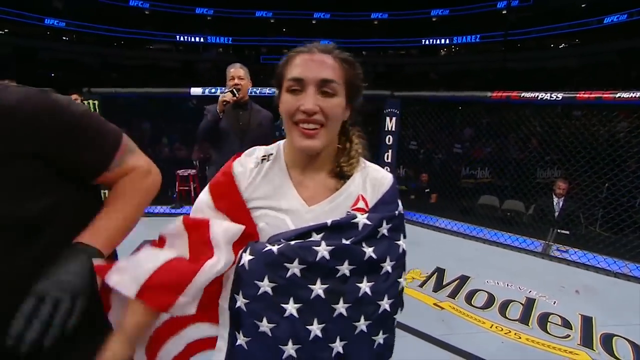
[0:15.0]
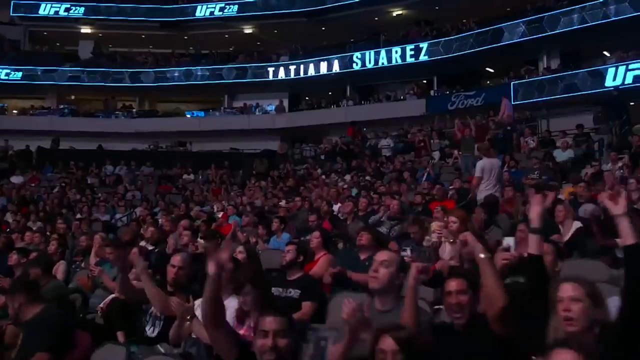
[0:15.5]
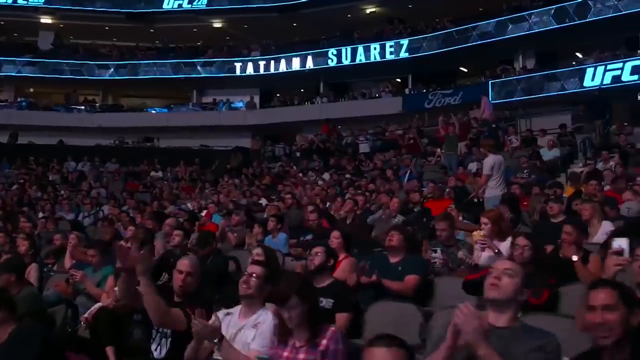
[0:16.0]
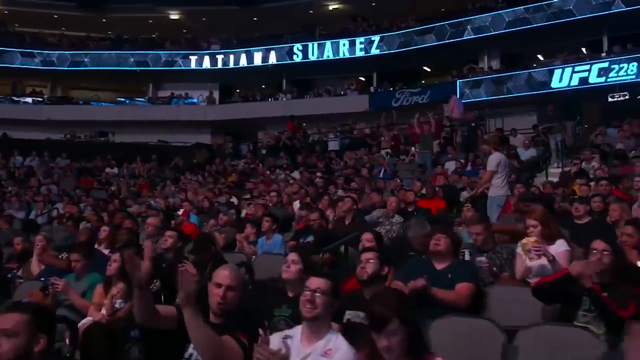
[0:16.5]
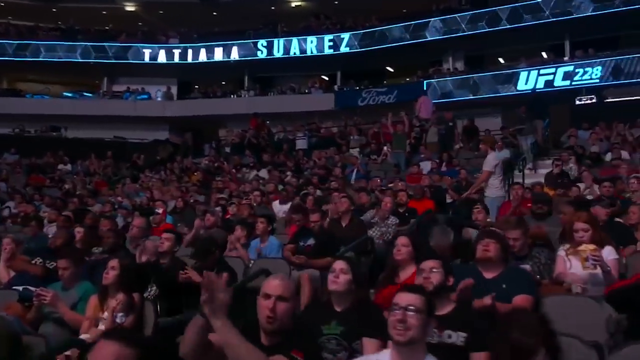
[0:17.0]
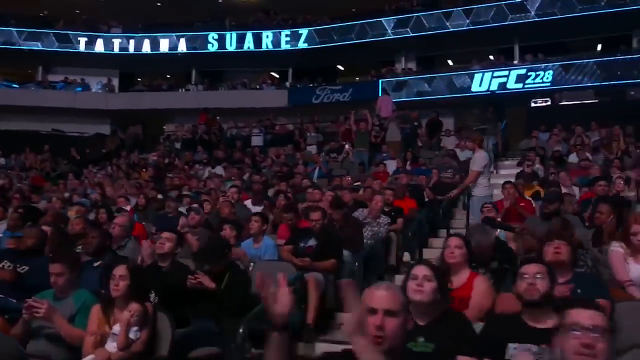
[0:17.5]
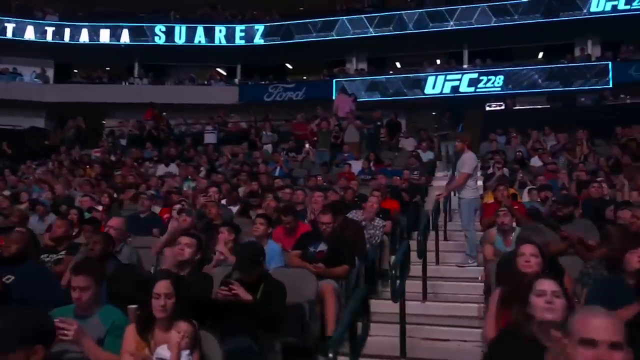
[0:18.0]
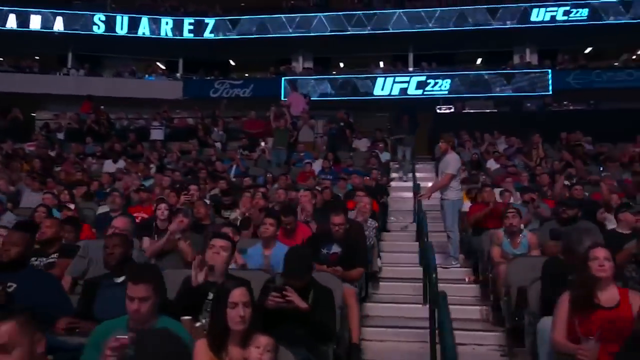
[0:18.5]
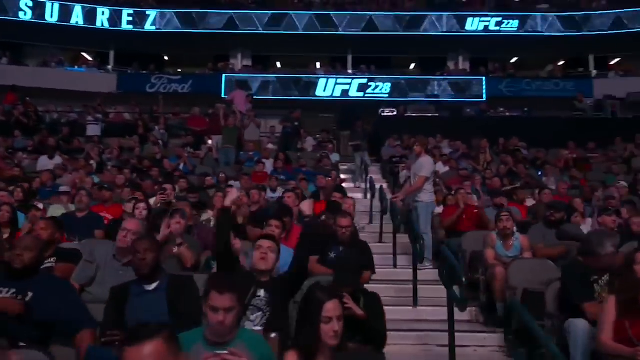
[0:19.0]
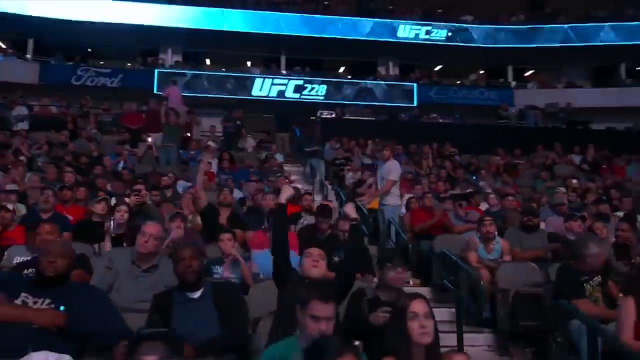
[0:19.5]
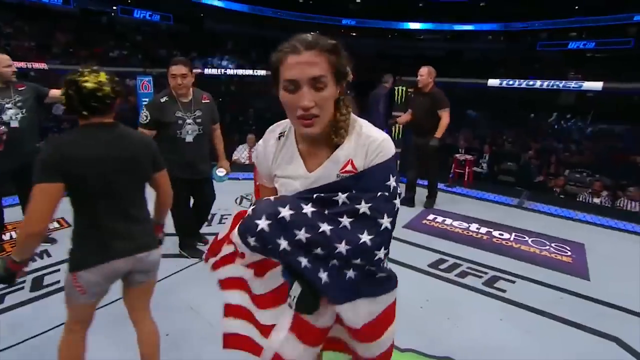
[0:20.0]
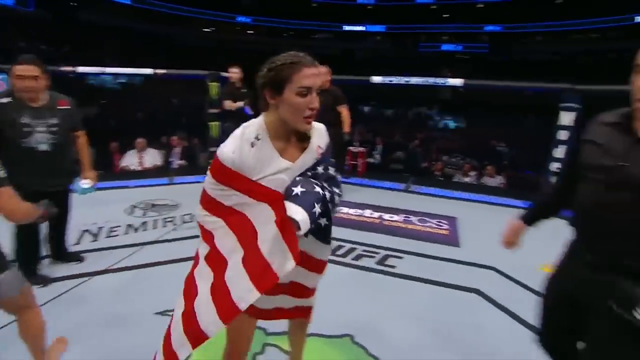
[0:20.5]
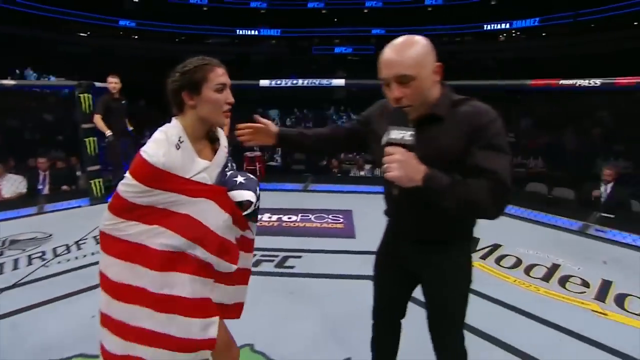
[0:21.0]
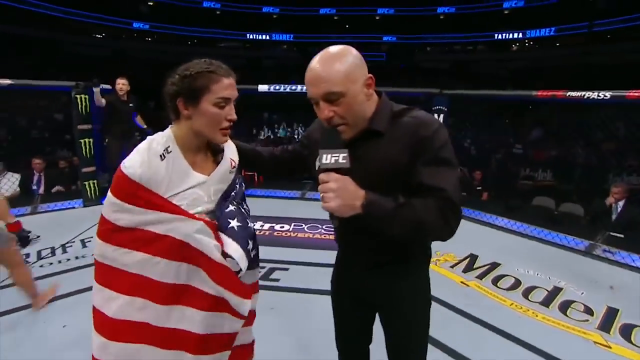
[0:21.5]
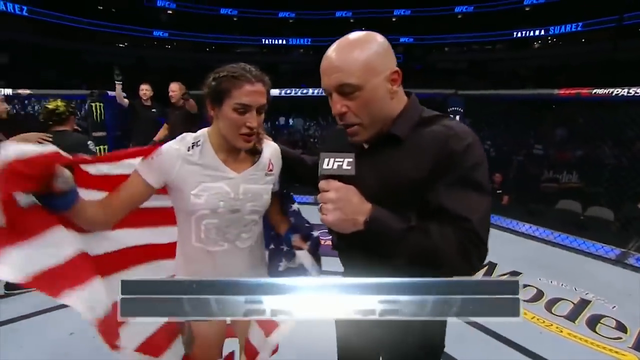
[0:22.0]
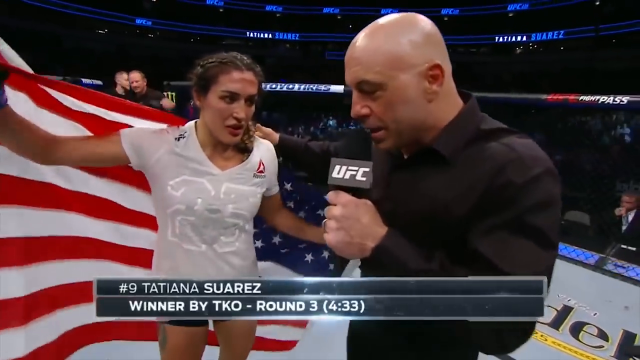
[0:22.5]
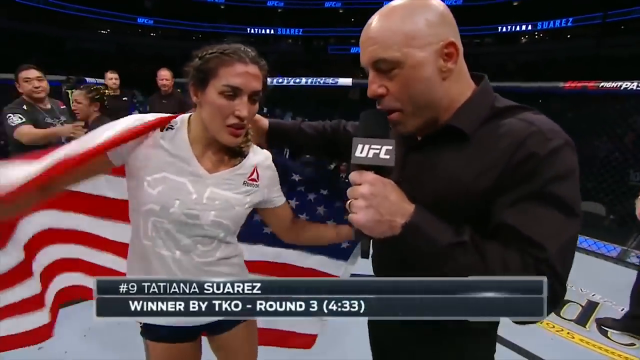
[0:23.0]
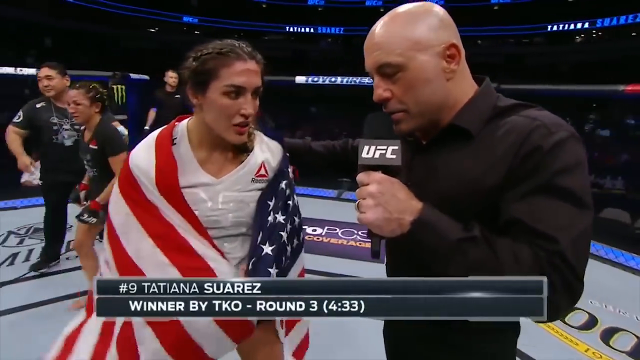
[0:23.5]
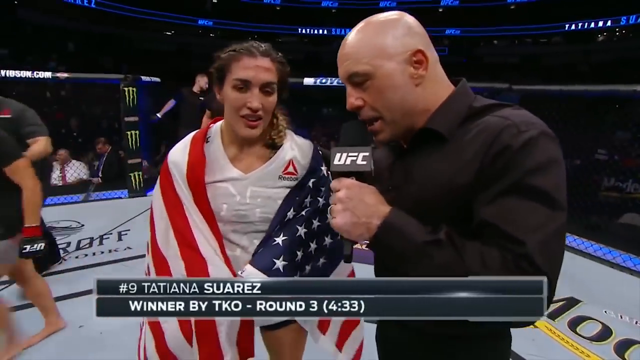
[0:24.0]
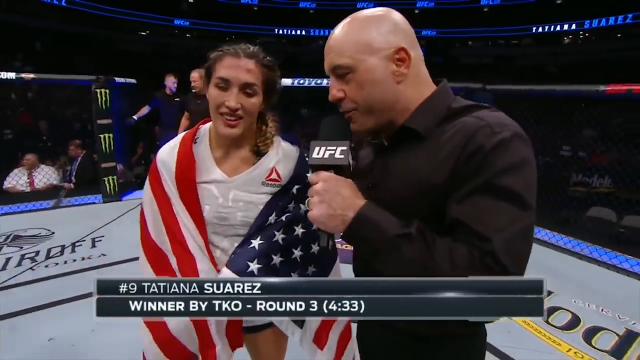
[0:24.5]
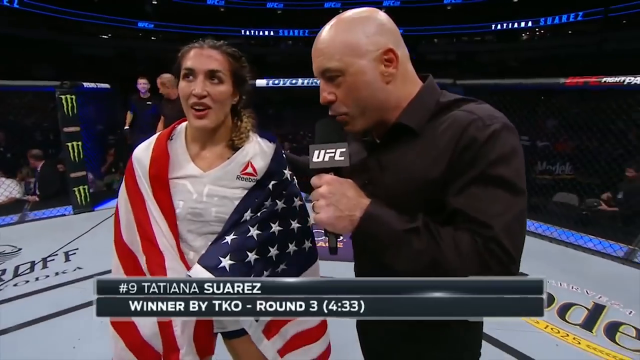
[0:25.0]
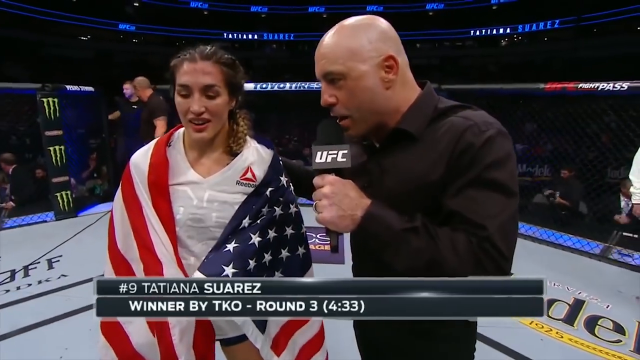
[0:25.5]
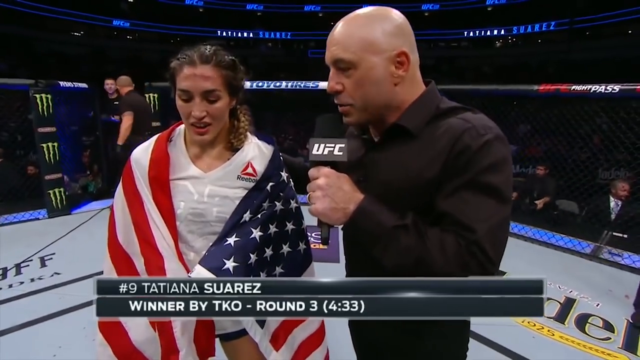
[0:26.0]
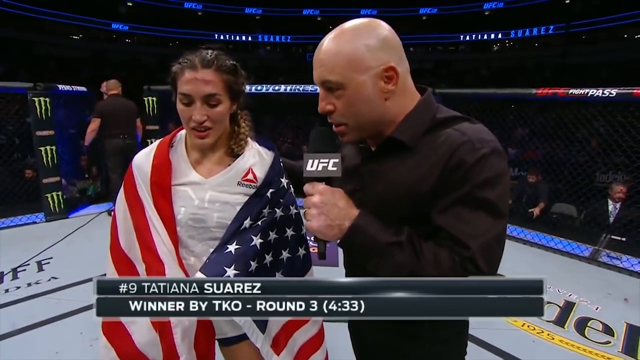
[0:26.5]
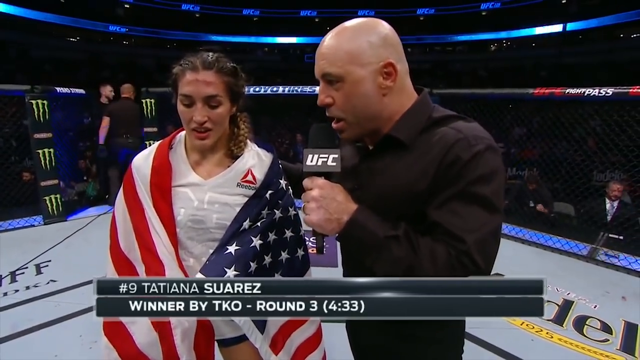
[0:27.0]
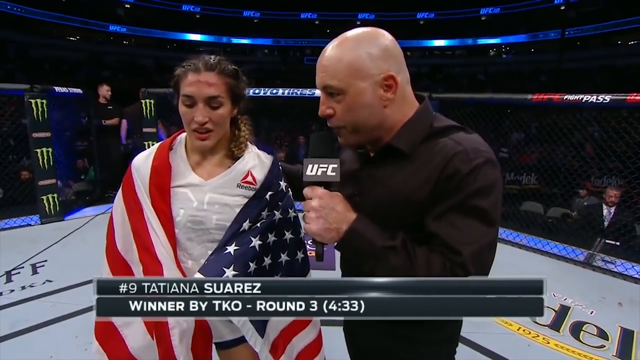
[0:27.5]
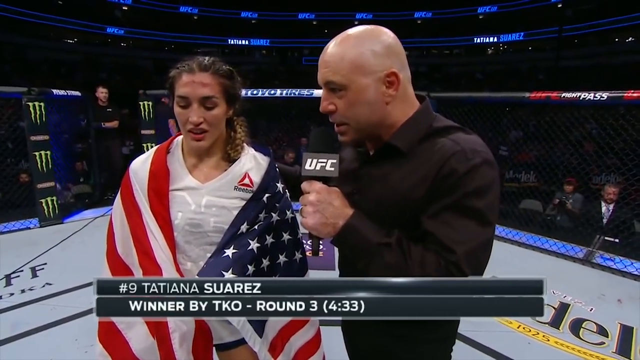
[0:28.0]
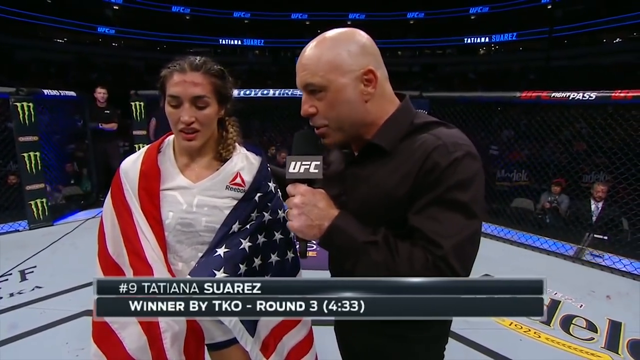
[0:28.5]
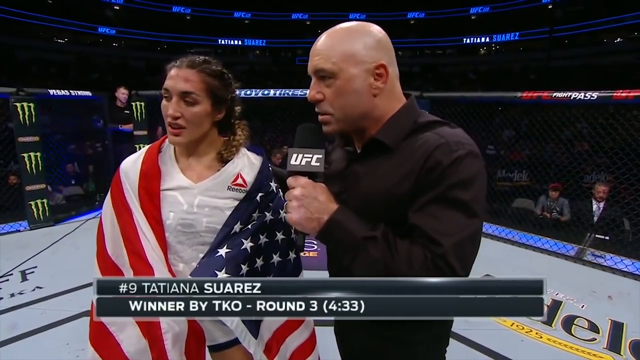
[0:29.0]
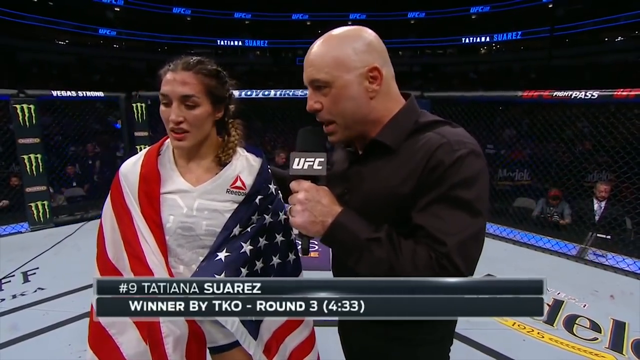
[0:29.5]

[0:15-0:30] The audience claps at UFC 228. The announcer, Joe Rogan, who has a shaved head, wears a black long-sleeved, button-down shirt with a collar and holds a UFC microphone in his left hand, talking to the winner at his right shoulder. She has an American flag draped around her body and wears a white shirt and black shorts. Over her right shoulder is a Monster Energy logo, with a man standing to the right of it. "Tatiana Suarez" is written on a neon marquee. "UFC" appears in white lettering in a black box in the bottom right corner, and the winner is identified as number nine, Tatiana Suarez. "UFC" is also written on the octagon floor. Text at the bottom of the screen reads "Winner by TKO, round three, four minutes and 33 seconds." The camera pans across the audience, where some people have their arms up in the air, cheering and happy. The referee, wearing blue latex gloves, apparently leaves the octagon.